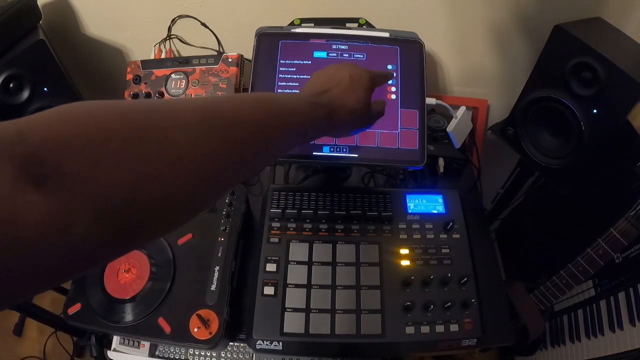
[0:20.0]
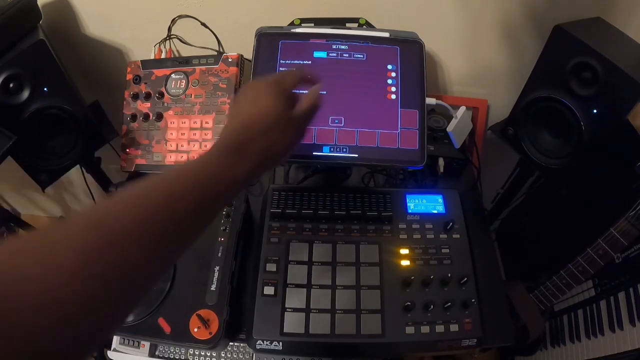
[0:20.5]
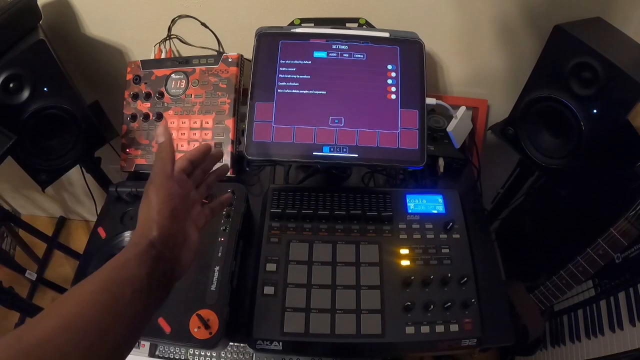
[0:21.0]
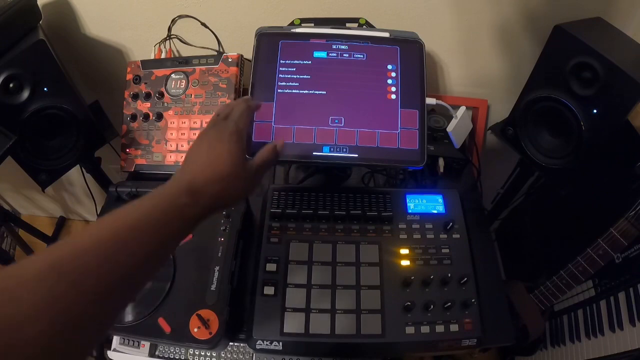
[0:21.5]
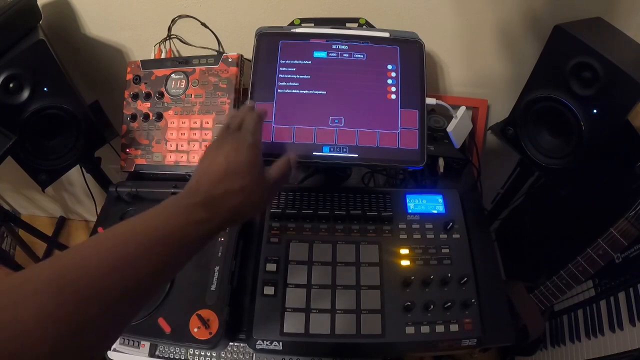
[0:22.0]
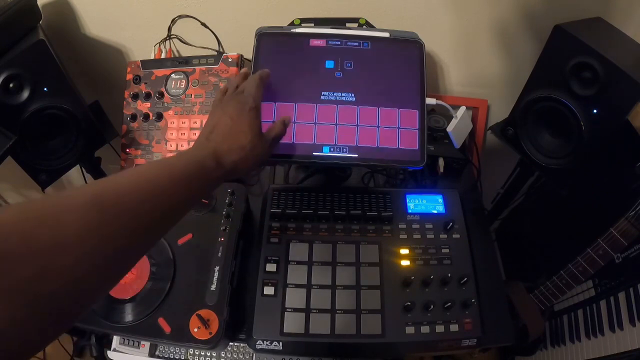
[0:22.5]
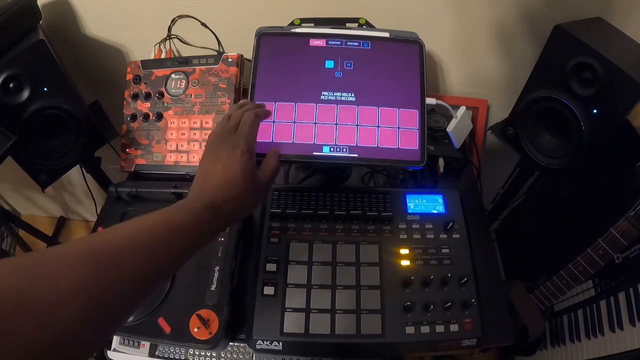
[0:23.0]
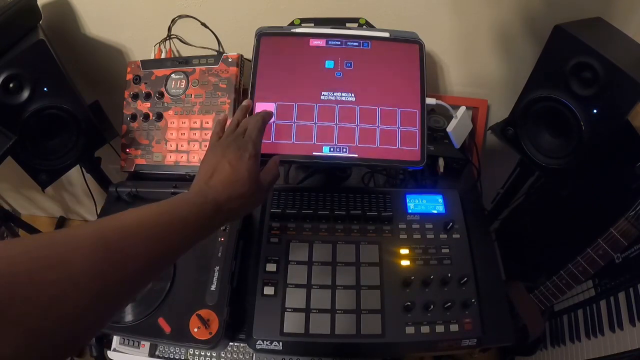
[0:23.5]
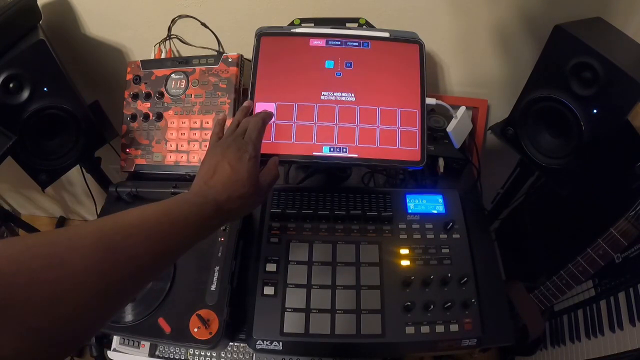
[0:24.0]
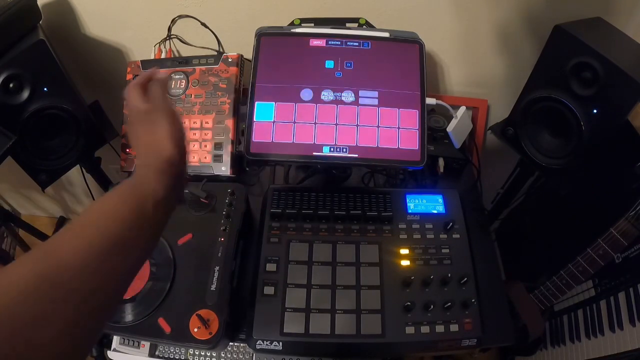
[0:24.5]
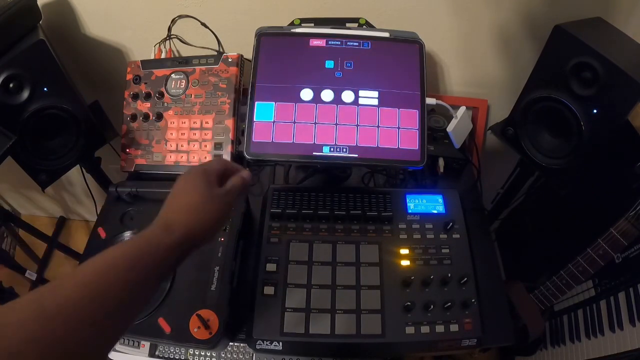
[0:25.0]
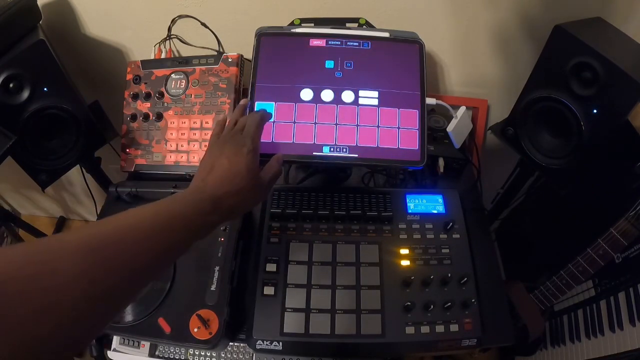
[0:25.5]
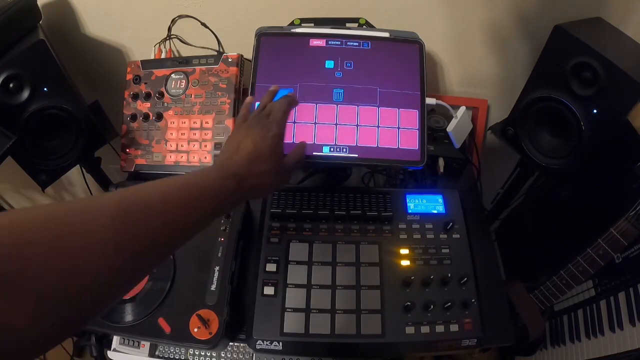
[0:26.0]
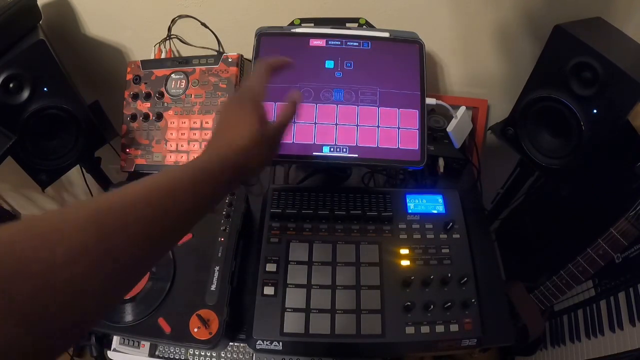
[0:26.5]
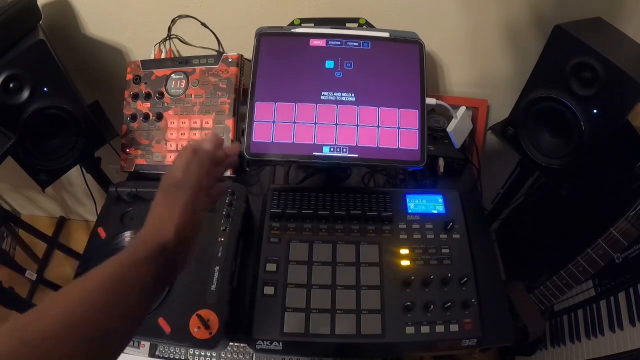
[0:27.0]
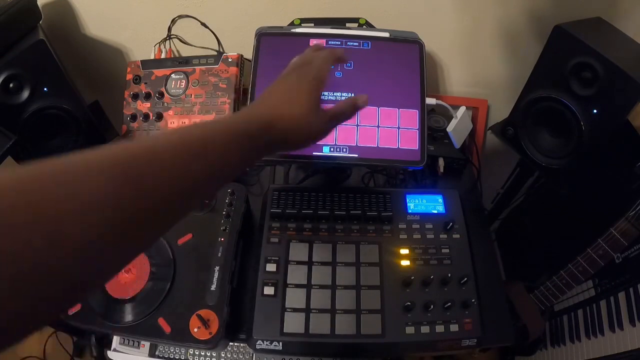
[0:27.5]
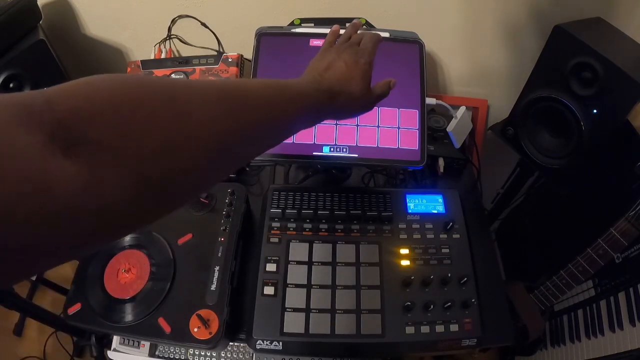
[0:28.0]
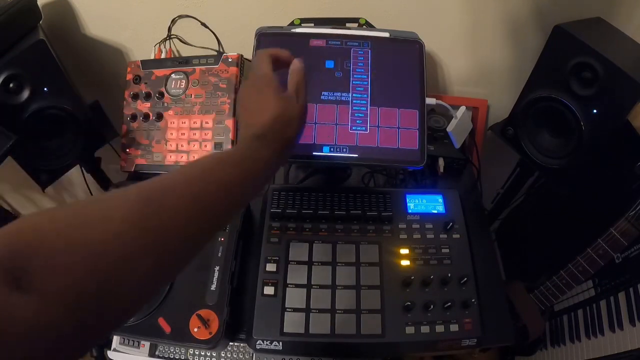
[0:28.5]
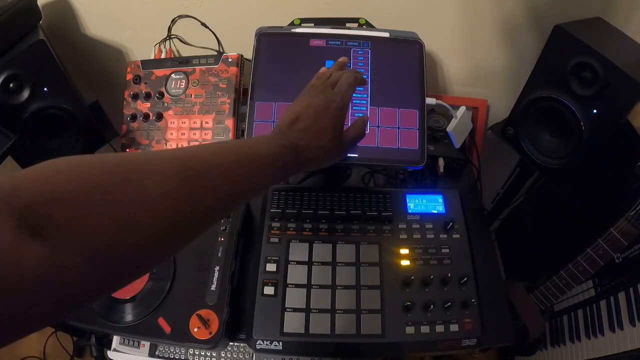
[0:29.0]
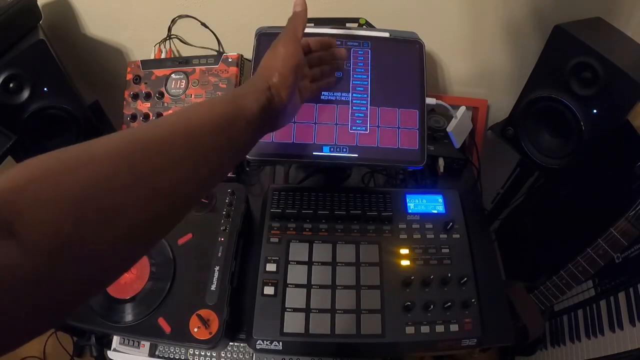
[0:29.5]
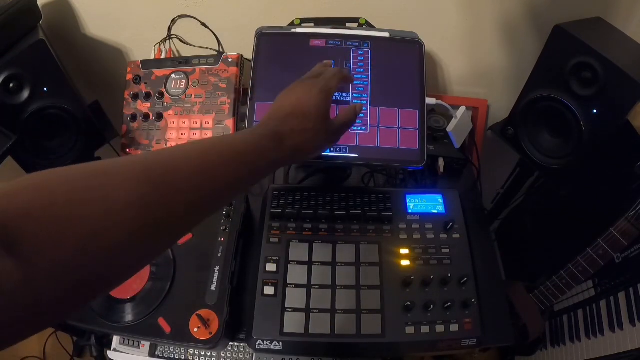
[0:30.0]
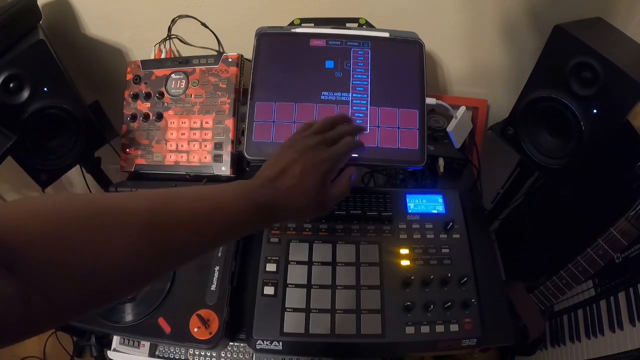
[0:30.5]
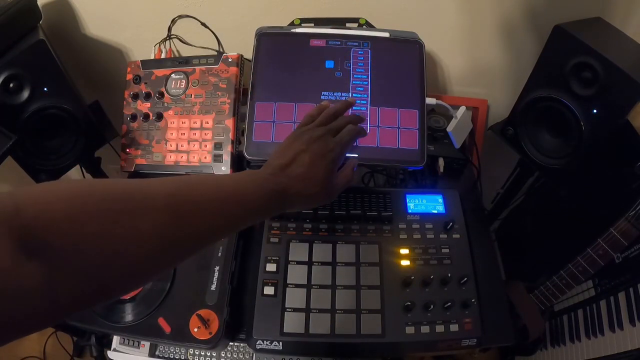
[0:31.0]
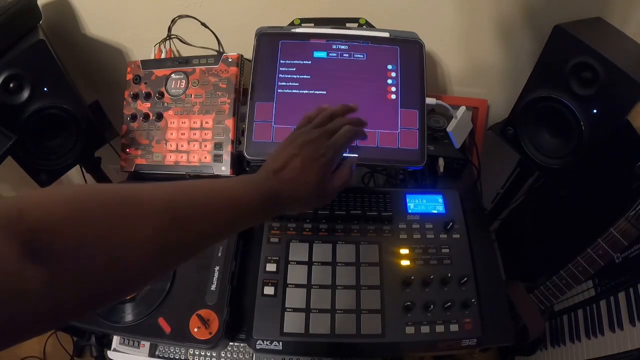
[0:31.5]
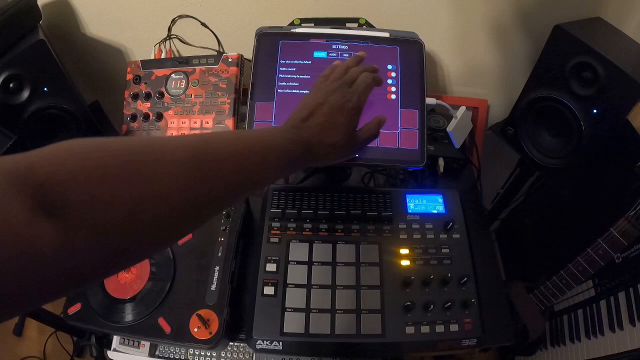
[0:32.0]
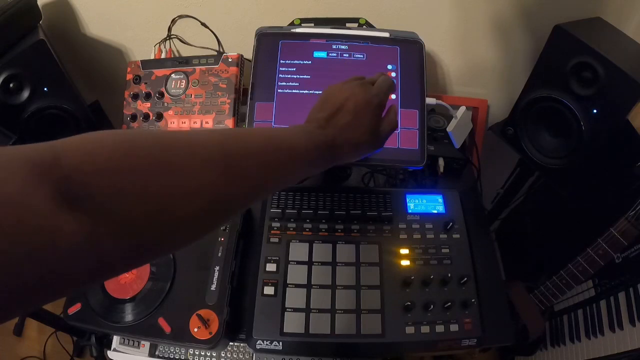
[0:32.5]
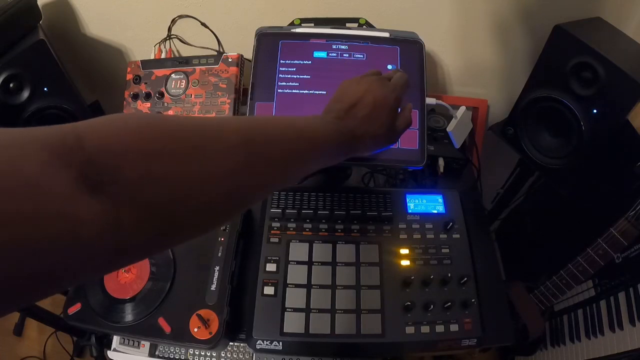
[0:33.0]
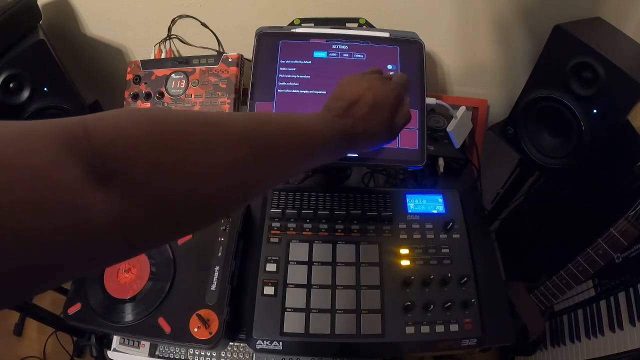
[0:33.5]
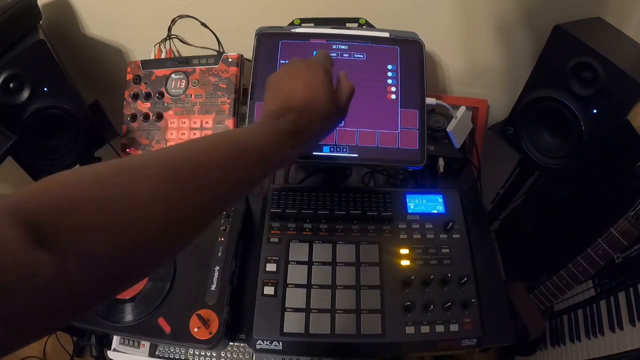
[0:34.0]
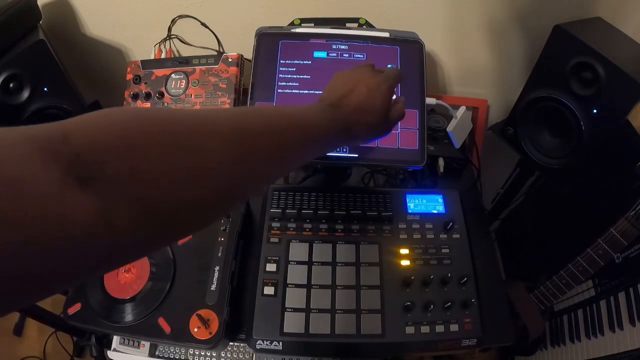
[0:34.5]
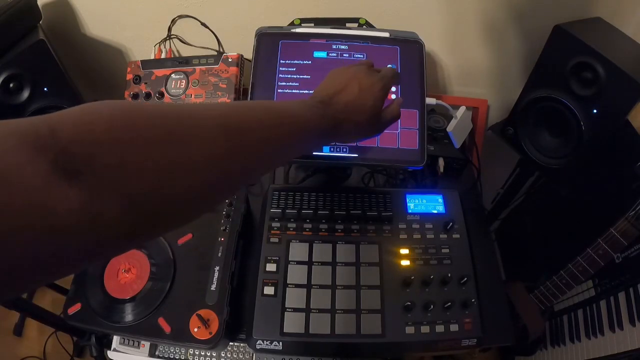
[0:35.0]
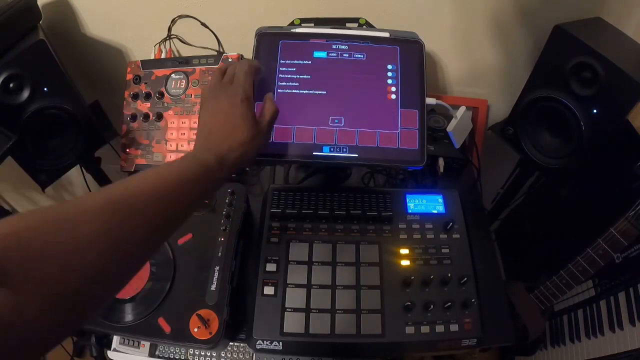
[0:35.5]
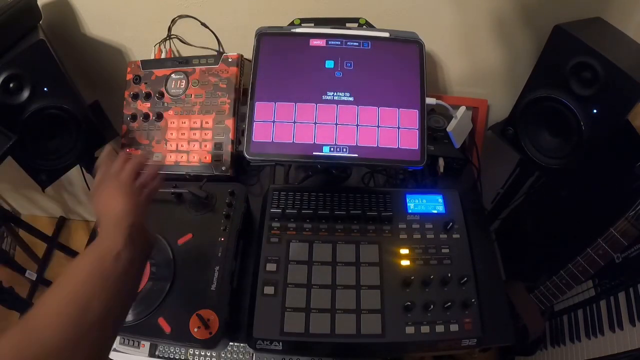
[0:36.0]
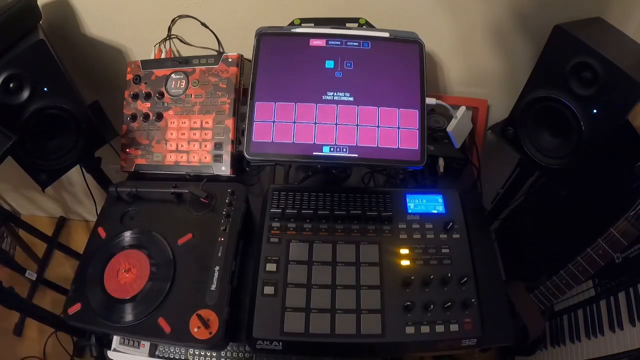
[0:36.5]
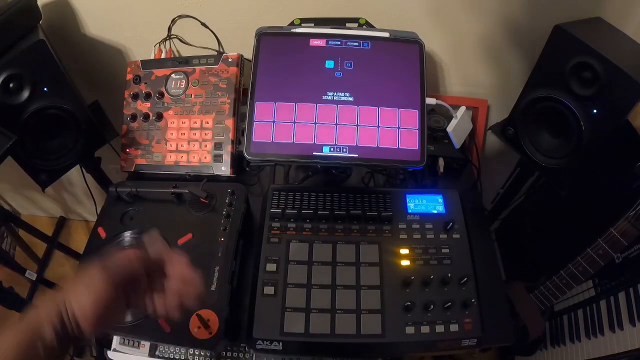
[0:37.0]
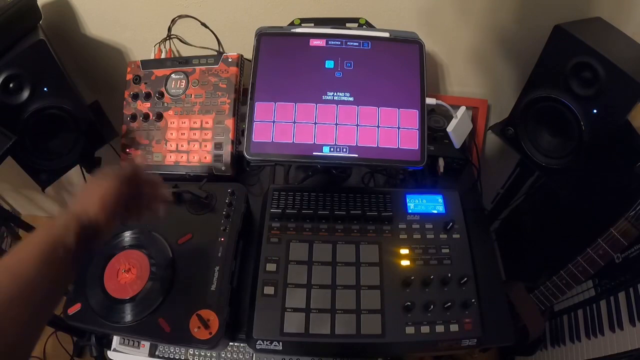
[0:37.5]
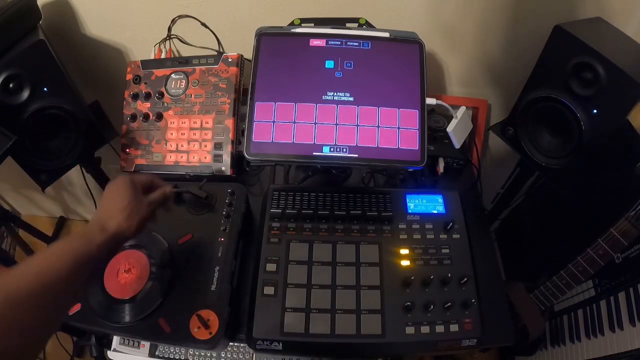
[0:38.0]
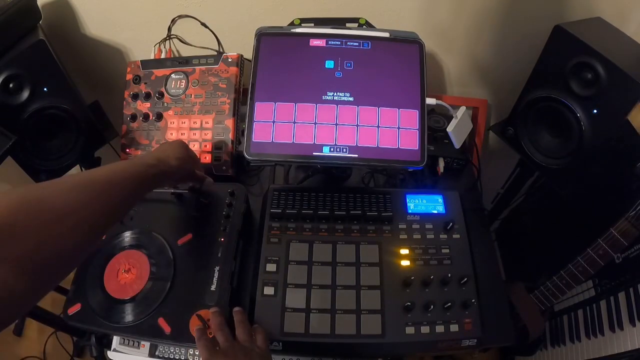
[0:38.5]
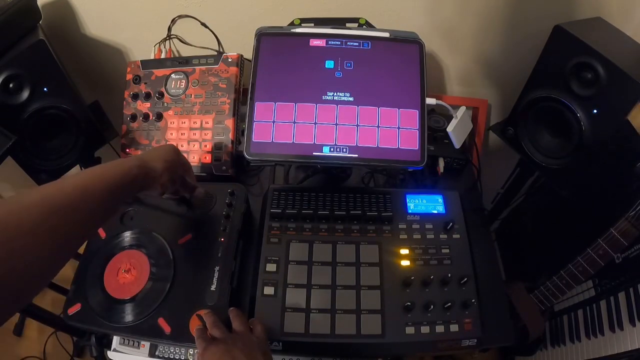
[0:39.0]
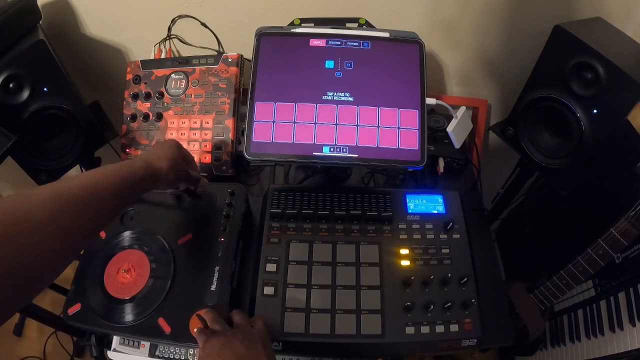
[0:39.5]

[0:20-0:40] The user reaches in with their arm and touches the electronic pad on a piece of electronic equipment with several different buttons. They touch different areas, bringing up different menus, opening and closing different pop-up windows and adjusting settings. Eventually the person reaches down to the left, where a vinyl record player is in the lower left, and grabs the arm with the needle on it; they appear to begin moving the arm over toward the vinyl record. The audio equipment appears to be hooked together. There is a speaker on the left and a speaker on the right, and the main piece of equipment the user is manipulating is the electronic touch pad on the top part of all the equipment, where they use their fingers to open menus and touch buttons inside them.